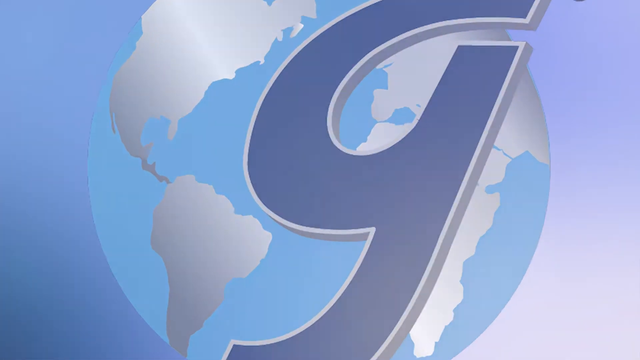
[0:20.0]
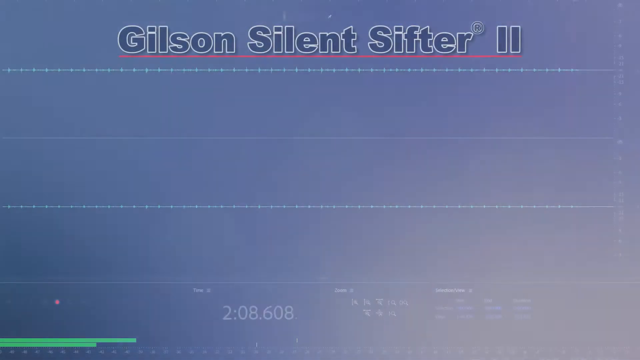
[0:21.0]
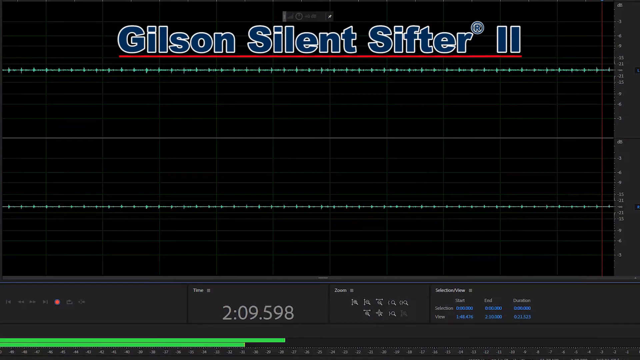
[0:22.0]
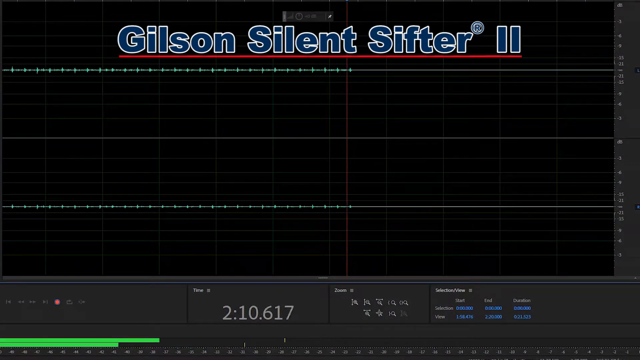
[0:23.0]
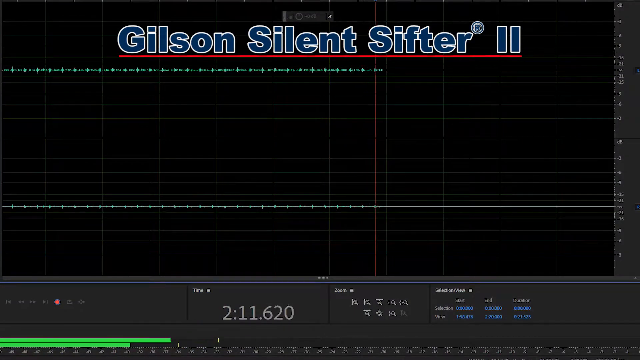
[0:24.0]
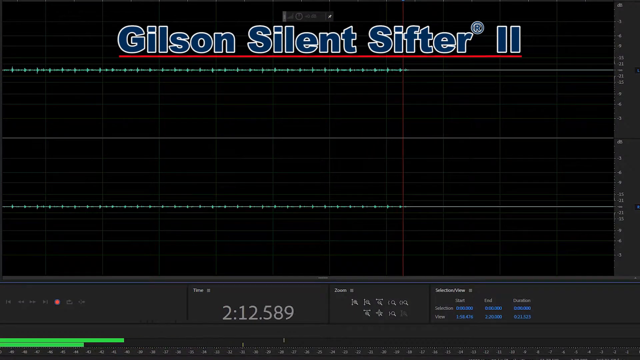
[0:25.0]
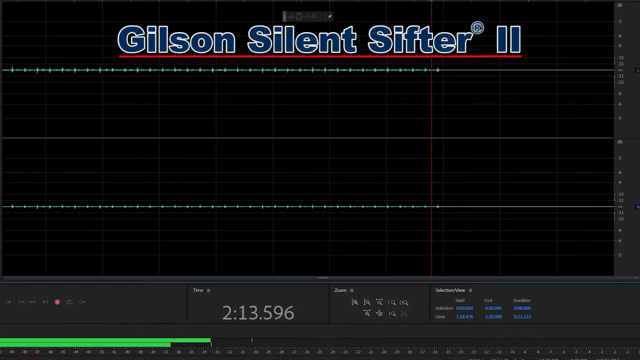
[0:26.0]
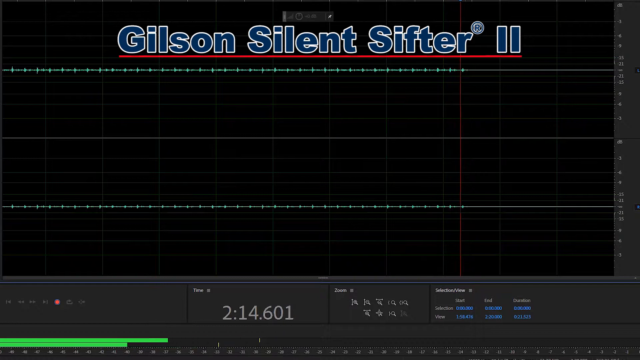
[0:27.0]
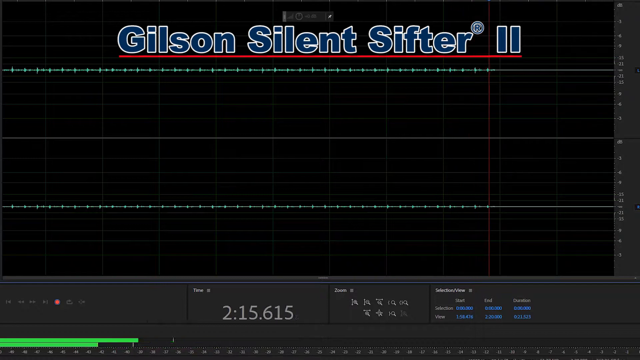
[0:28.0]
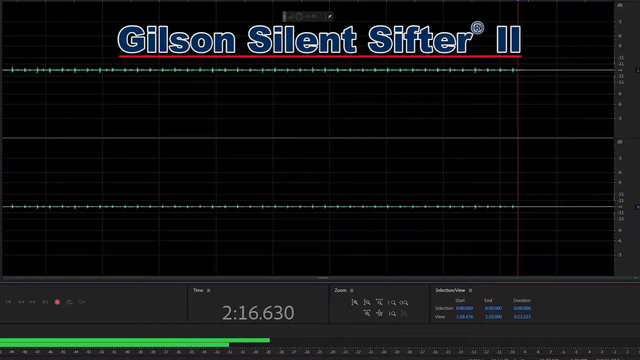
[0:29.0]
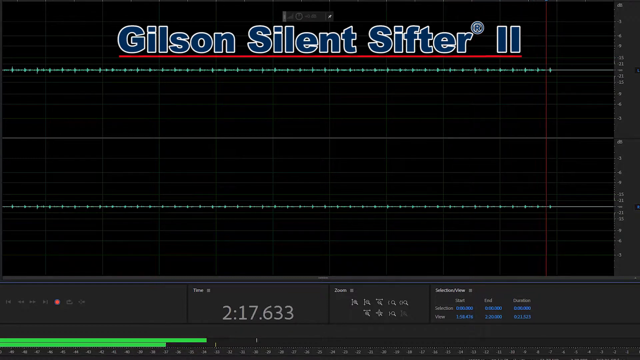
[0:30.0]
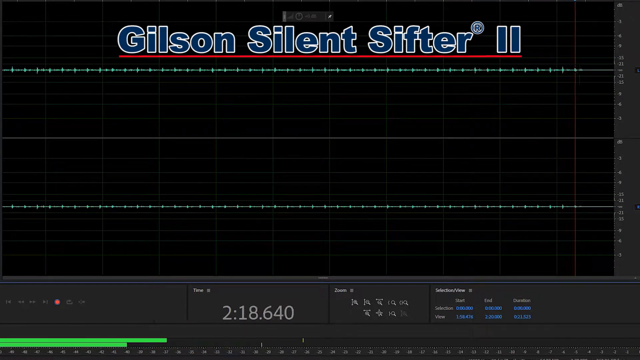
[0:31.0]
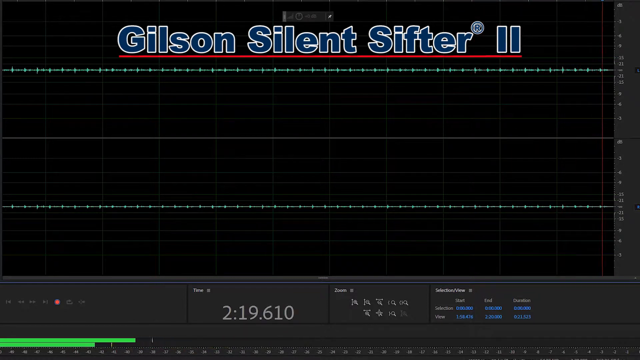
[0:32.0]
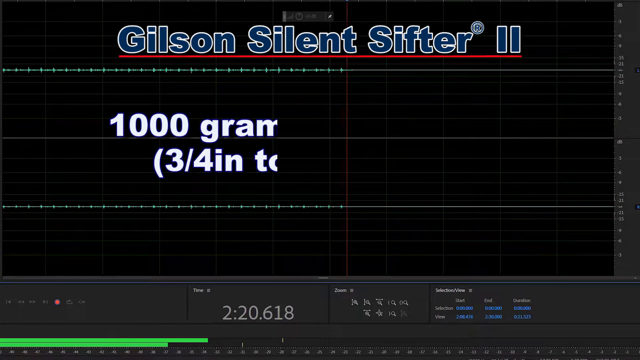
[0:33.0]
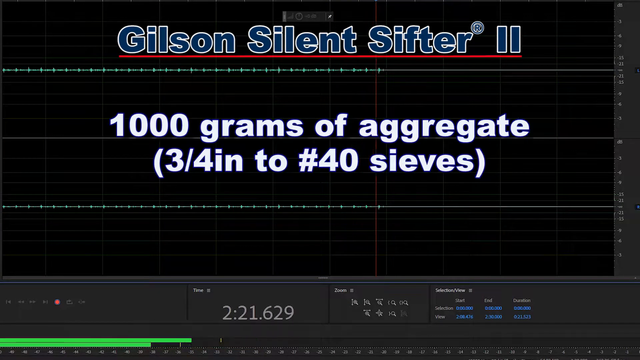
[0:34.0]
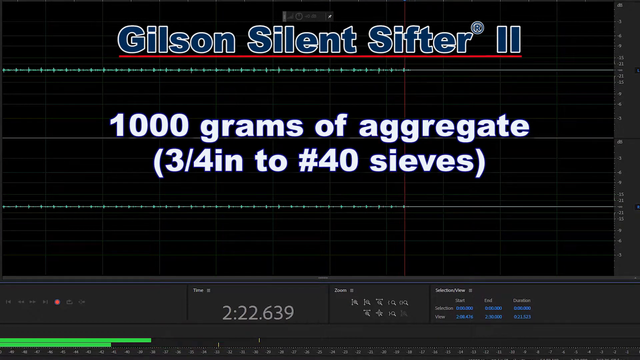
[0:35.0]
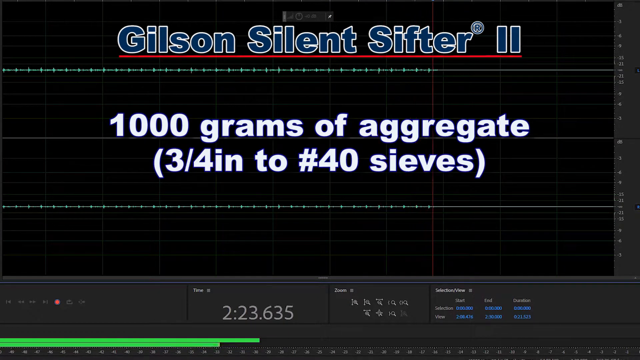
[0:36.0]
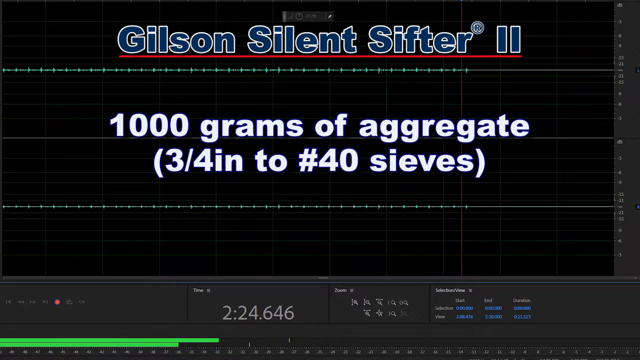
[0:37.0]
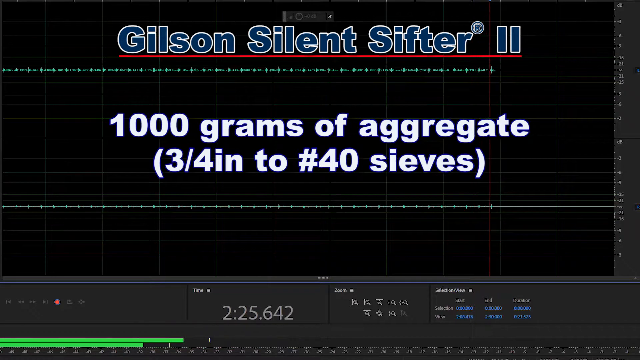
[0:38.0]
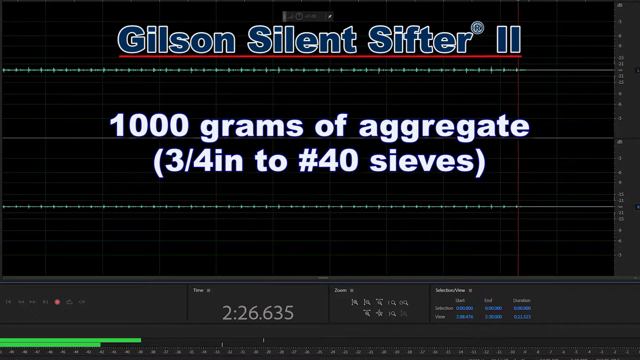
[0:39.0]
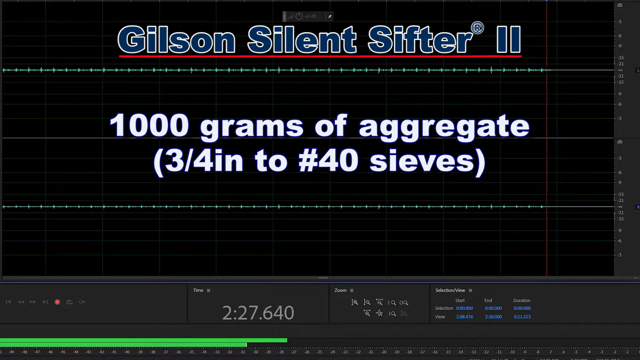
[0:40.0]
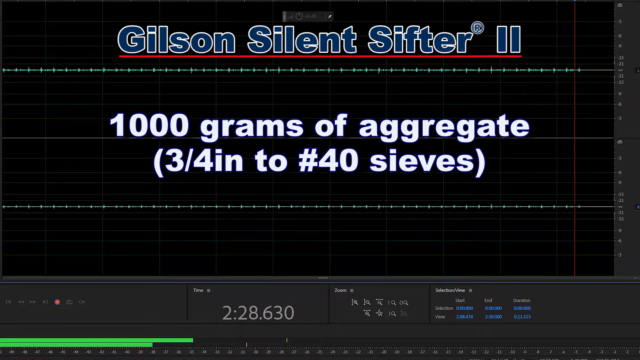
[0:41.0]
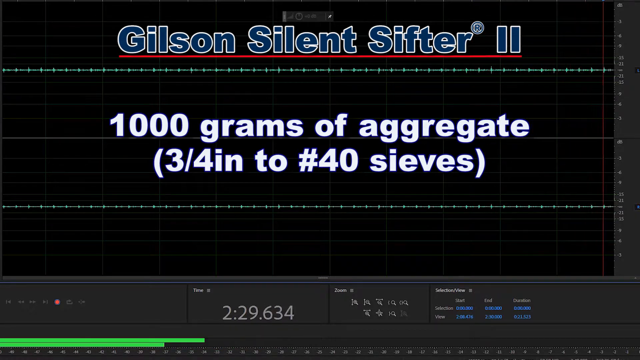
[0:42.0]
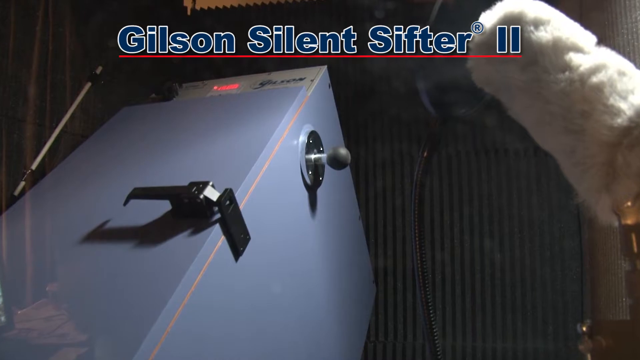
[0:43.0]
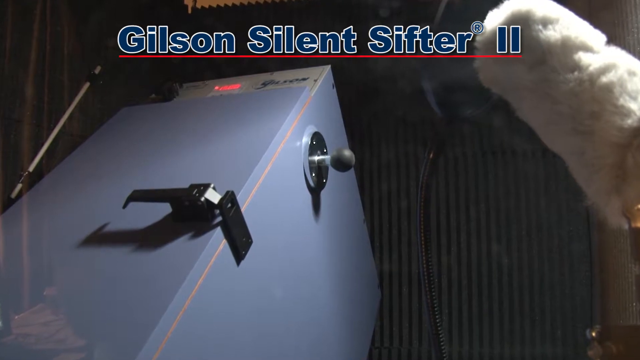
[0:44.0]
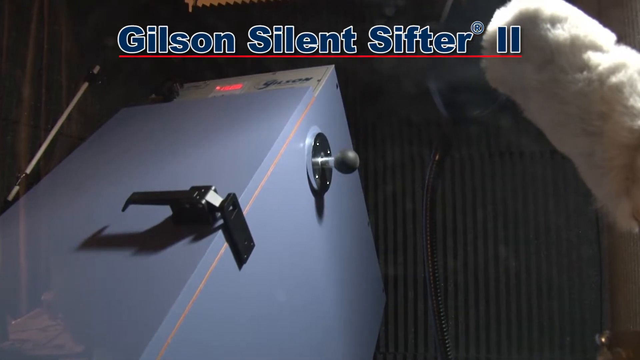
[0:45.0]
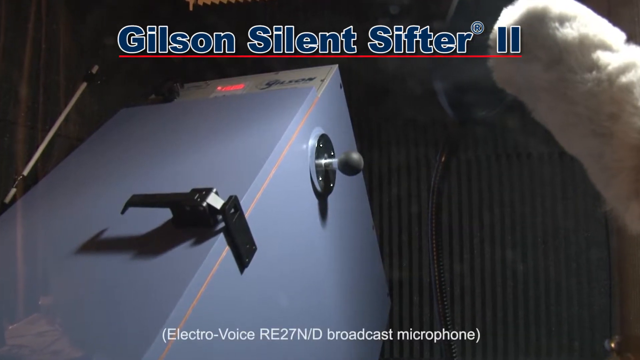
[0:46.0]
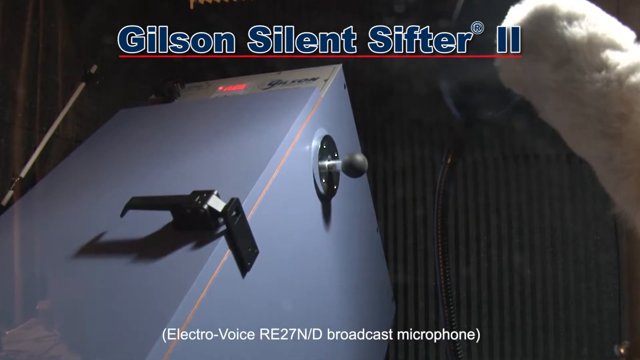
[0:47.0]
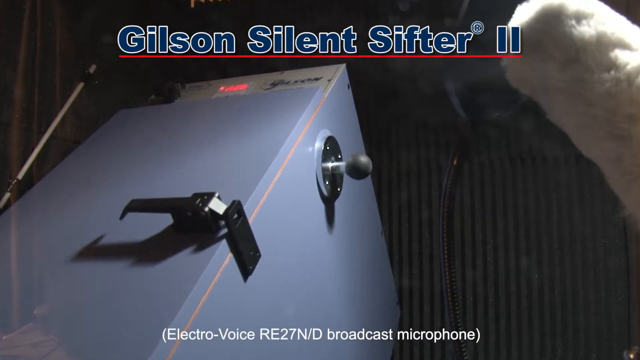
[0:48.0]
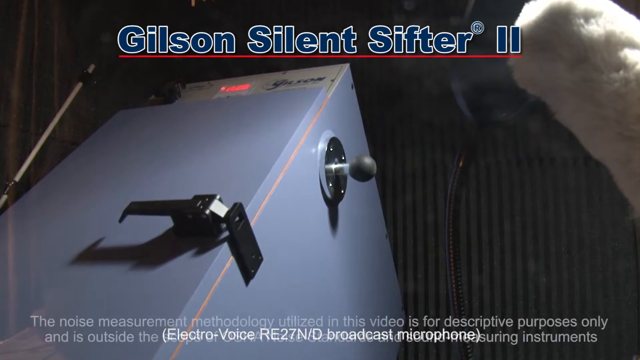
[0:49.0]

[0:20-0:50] Some tools are shown. The device seems to be the Gilson Silent Sifter 2. Visual information moves from left to right across the screen, including something like 100 grams of aggregate 3 by 4.